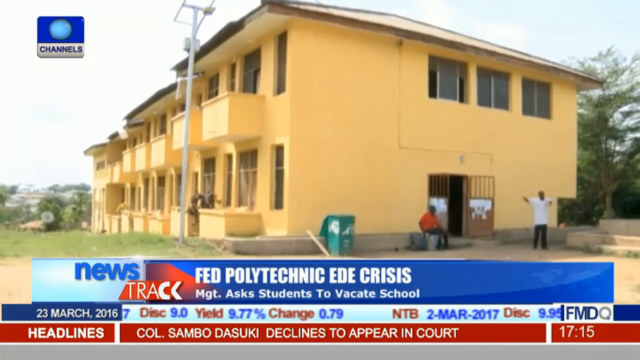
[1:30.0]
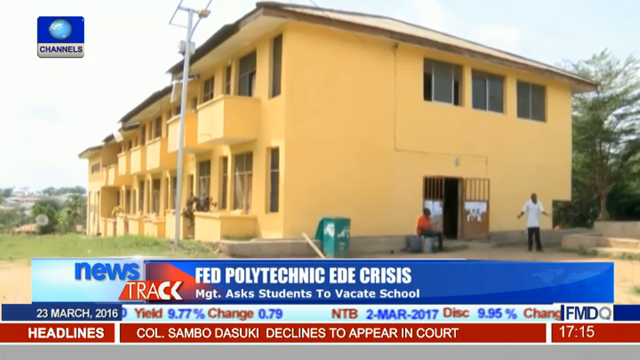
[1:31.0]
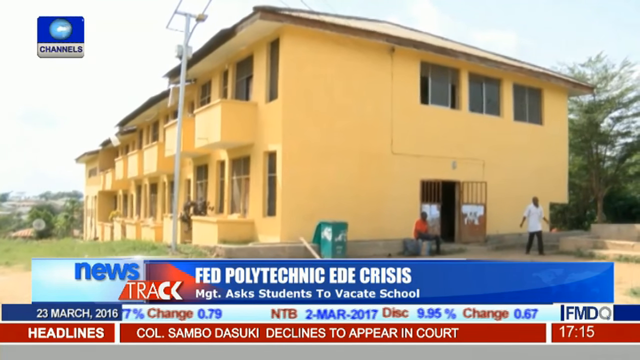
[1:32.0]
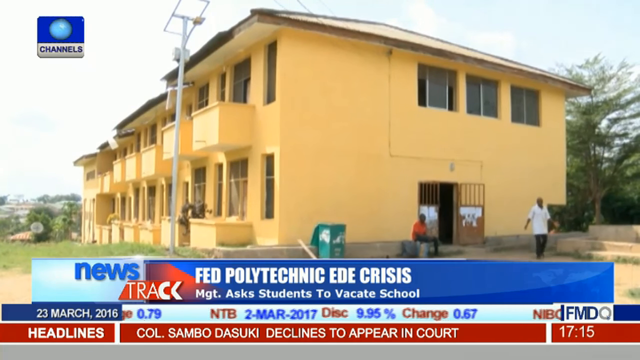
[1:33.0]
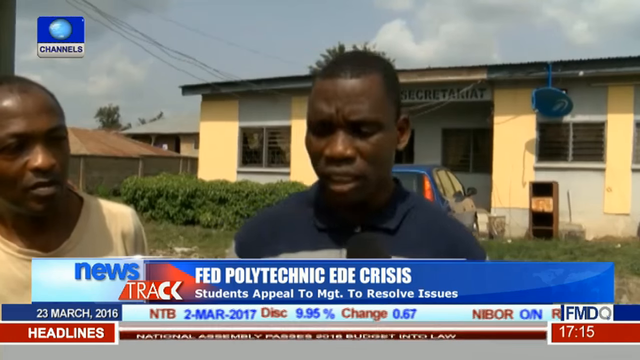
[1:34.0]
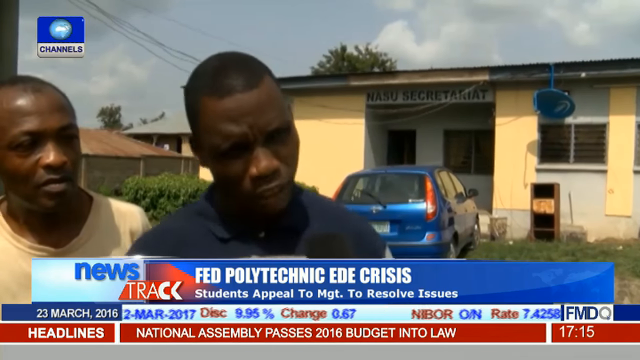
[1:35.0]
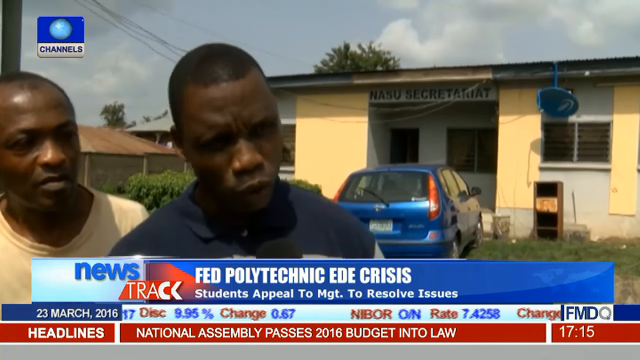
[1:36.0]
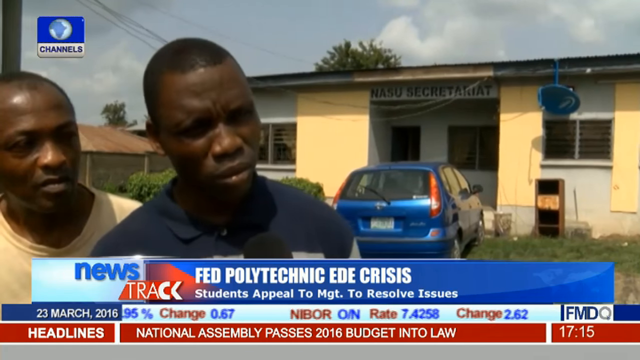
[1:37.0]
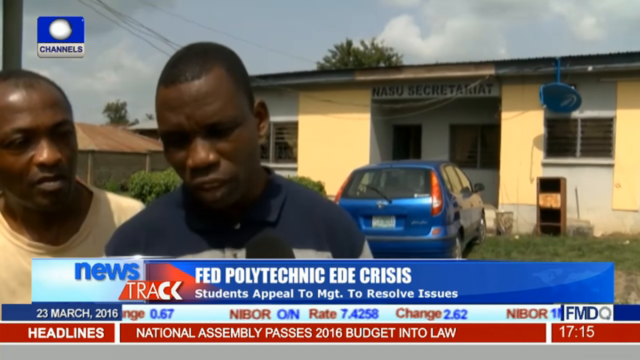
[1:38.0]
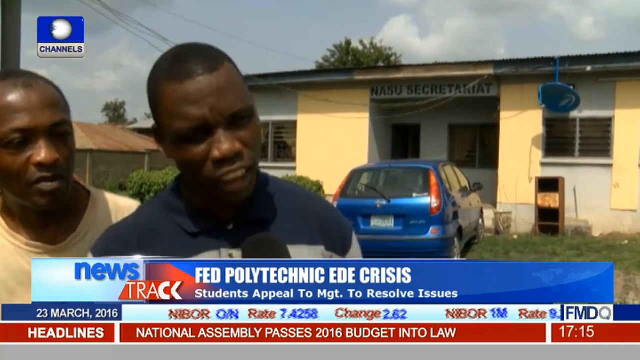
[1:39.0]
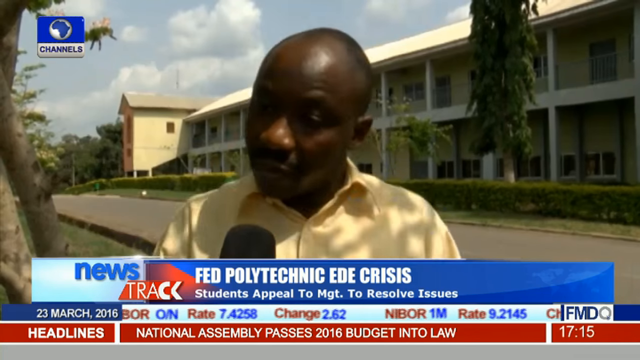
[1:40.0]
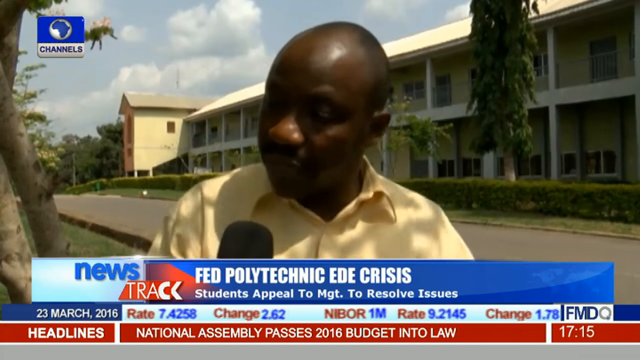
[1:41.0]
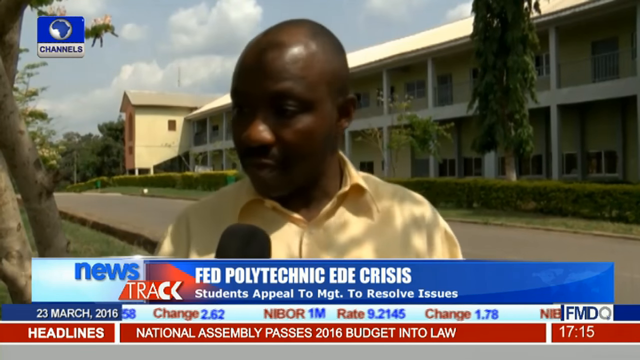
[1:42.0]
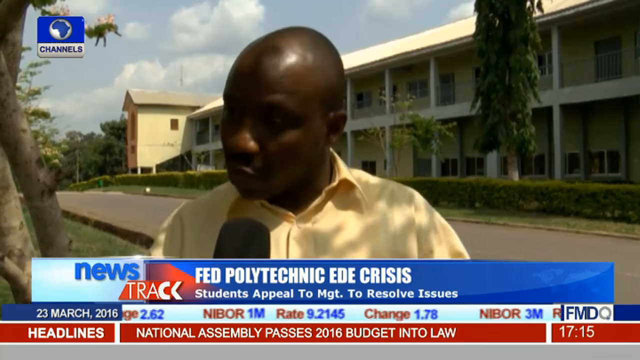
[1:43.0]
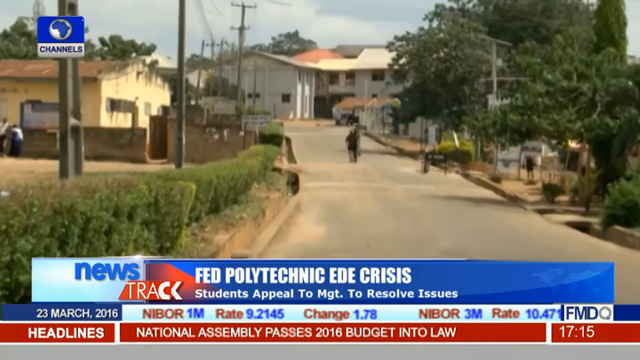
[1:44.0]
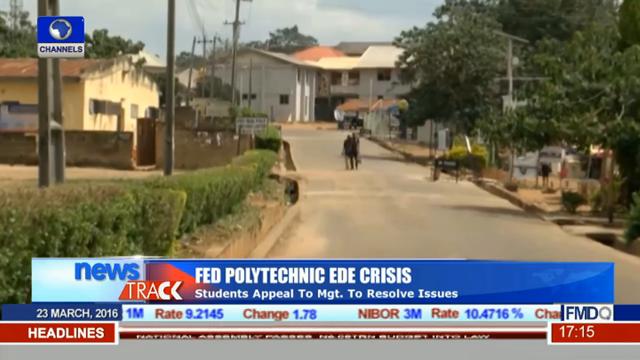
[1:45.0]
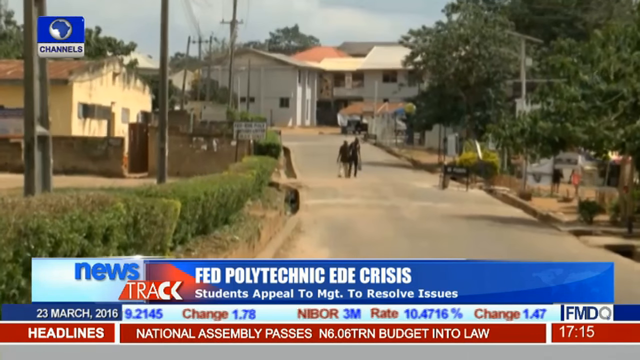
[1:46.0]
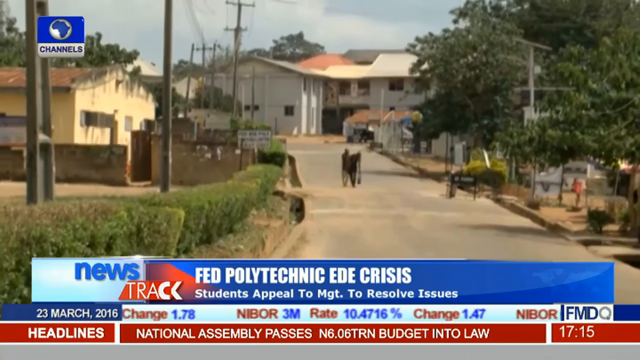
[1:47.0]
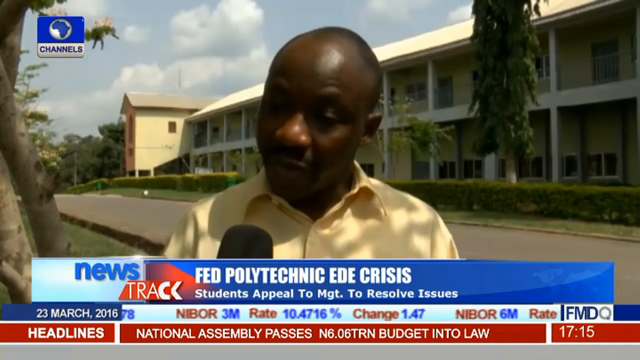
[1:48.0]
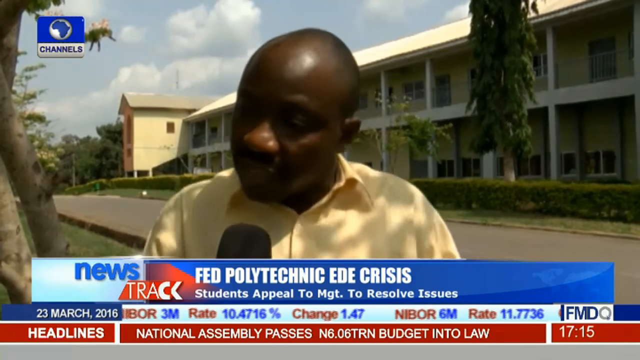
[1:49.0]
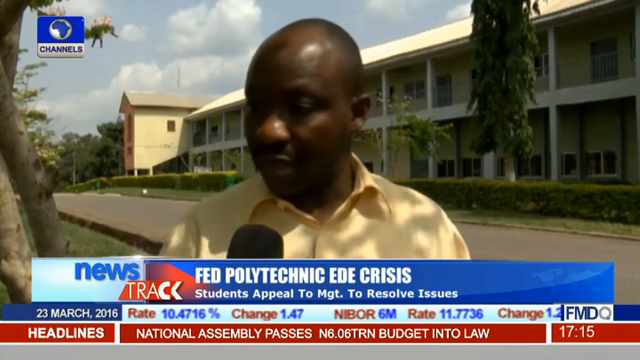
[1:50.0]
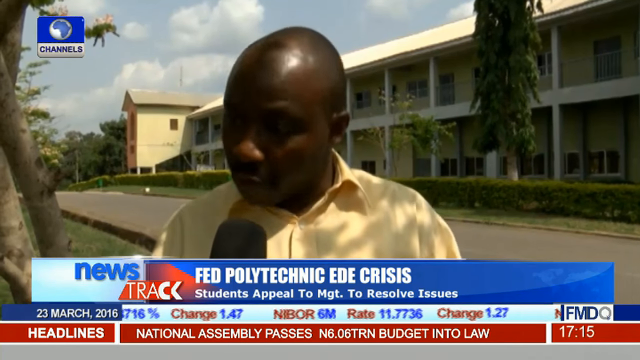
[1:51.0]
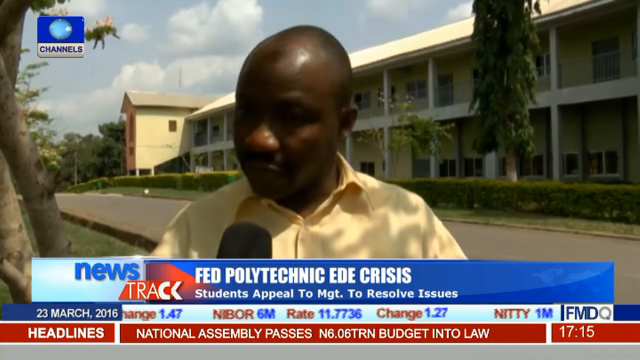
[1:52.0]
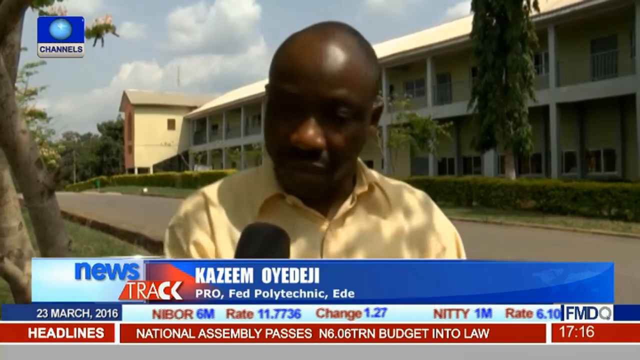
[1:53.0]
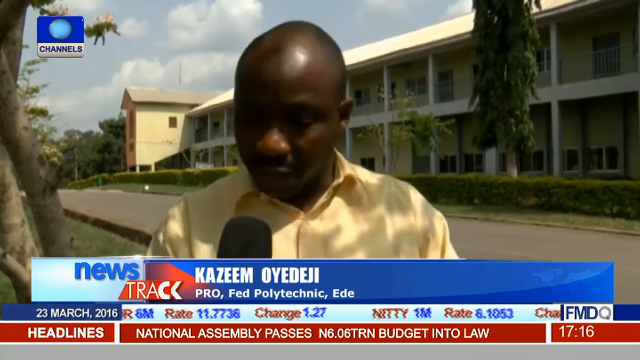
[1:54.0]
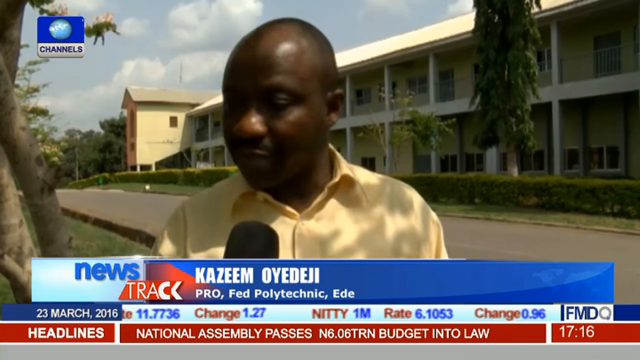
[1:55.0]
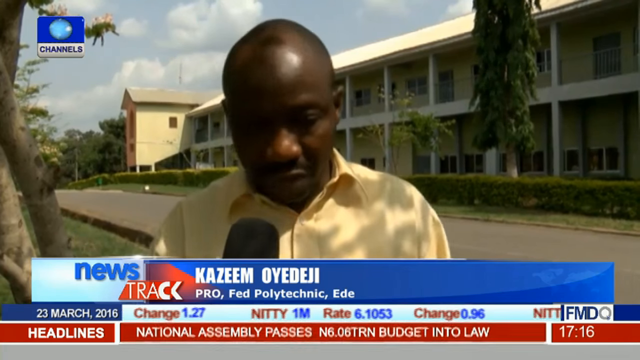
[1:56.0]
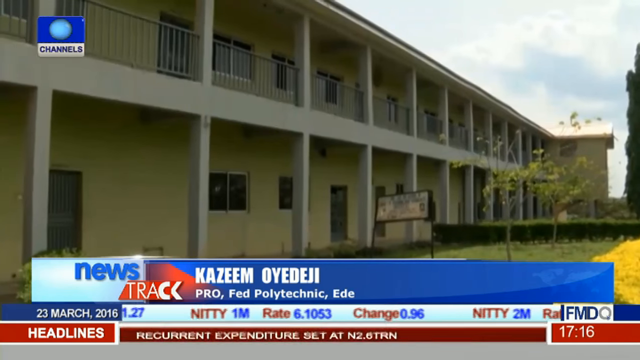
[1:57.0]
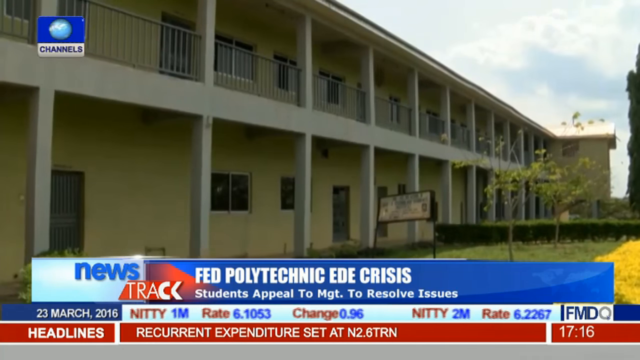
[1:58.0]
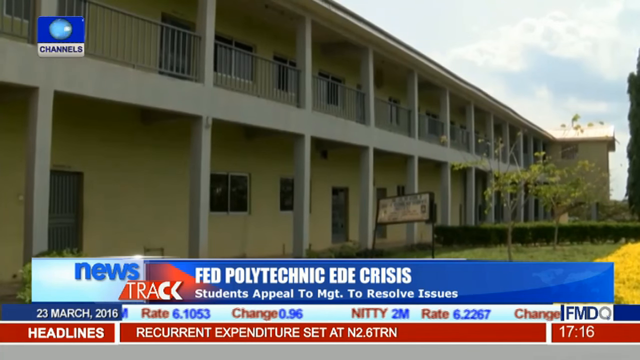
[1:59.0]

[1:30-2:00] Shots of a yellow building, which looks like either apartments or dorm rooms, show that each unit has a balcony. Outside the building are two men, one sitting in orange and one standing in white with his arms raised, and the gates into the building are open. The man in white starts to come towards the camera as if to speak to the reporters. The video then changes to an interview with two men in front of a different yellow building, and the main man is engaged with the reporter. Another interview follows with a man in a yellow shirt who also seems adamant and is very animated, using his hands and shrugging his shoulders at times. This interview is held in front of a long, commercial-type yellow building next to a nicely paved road.